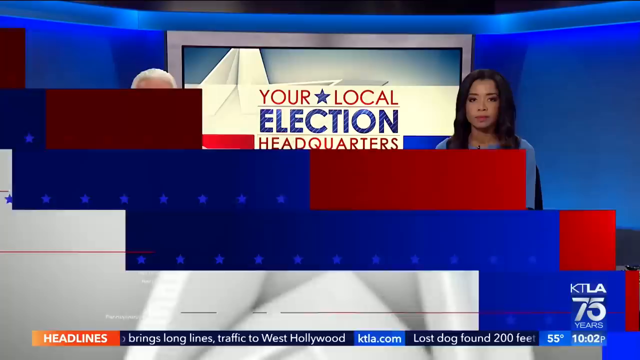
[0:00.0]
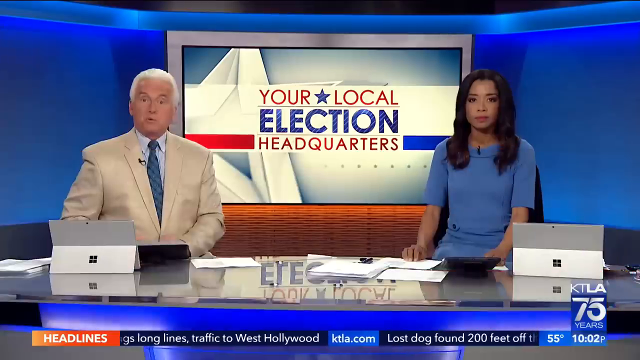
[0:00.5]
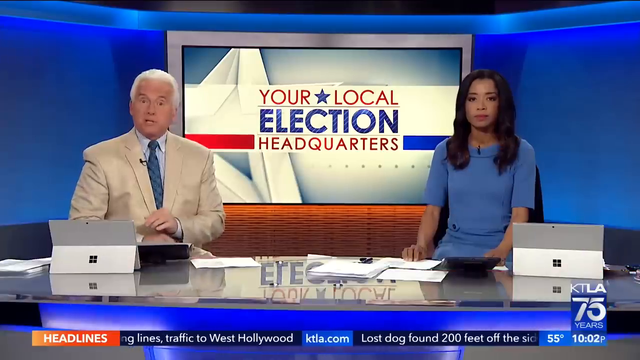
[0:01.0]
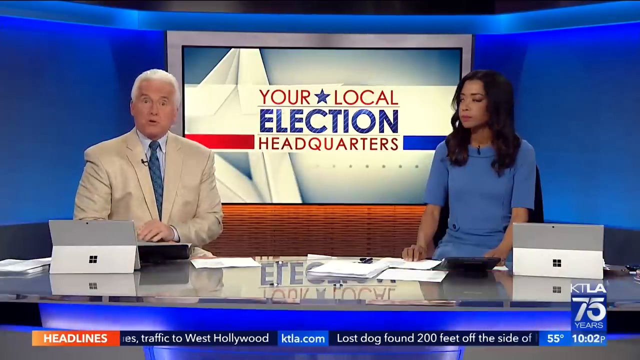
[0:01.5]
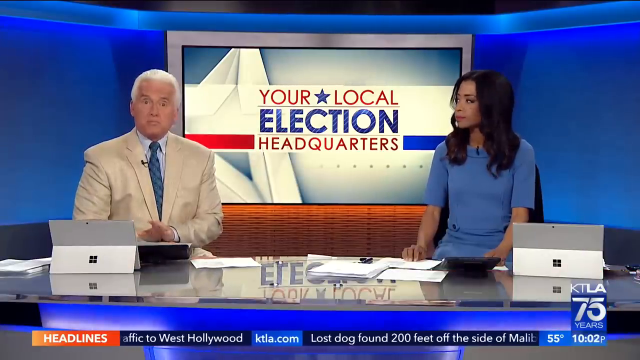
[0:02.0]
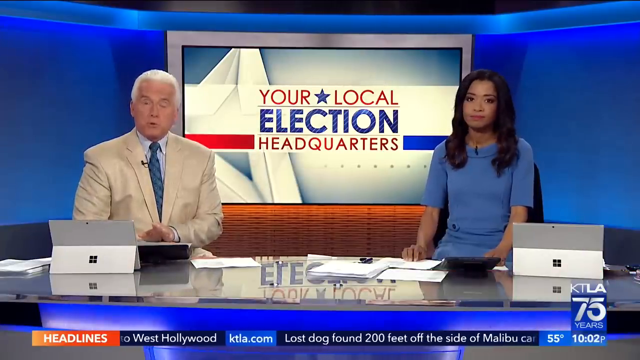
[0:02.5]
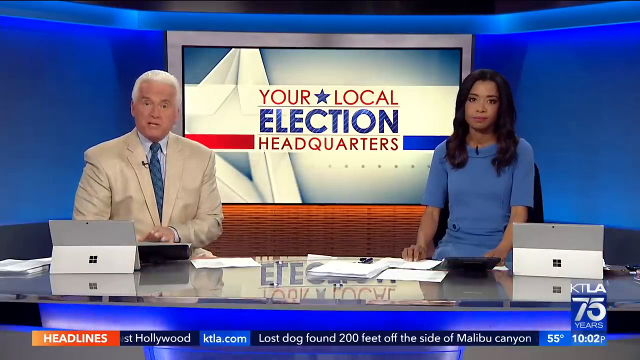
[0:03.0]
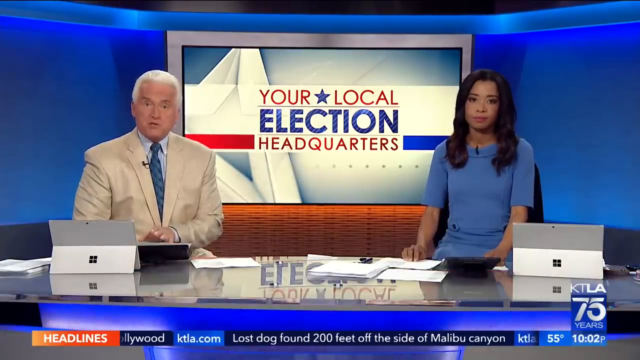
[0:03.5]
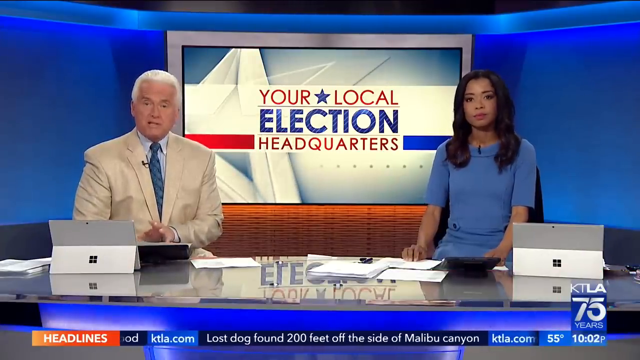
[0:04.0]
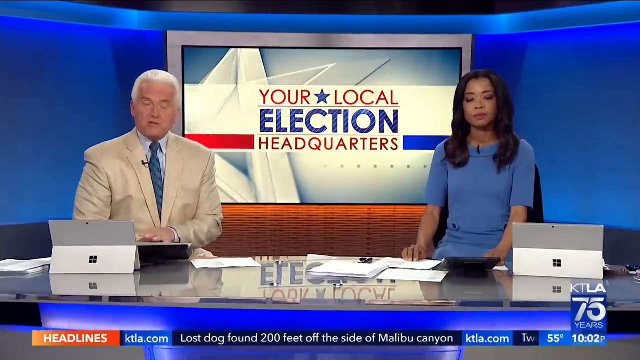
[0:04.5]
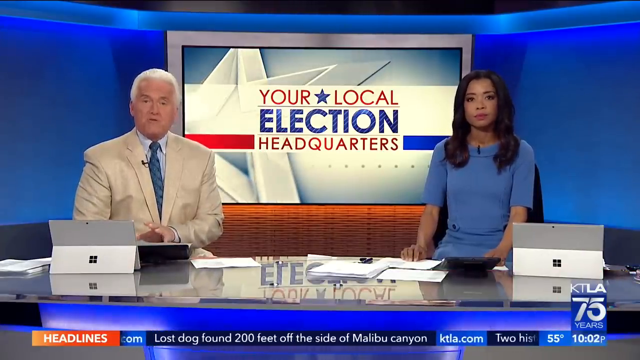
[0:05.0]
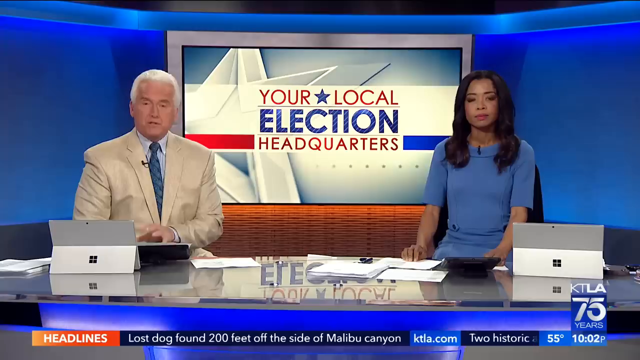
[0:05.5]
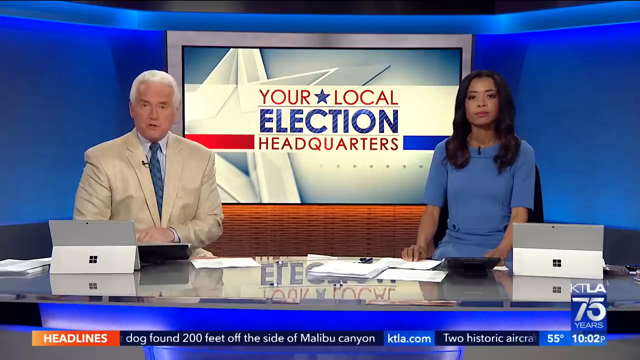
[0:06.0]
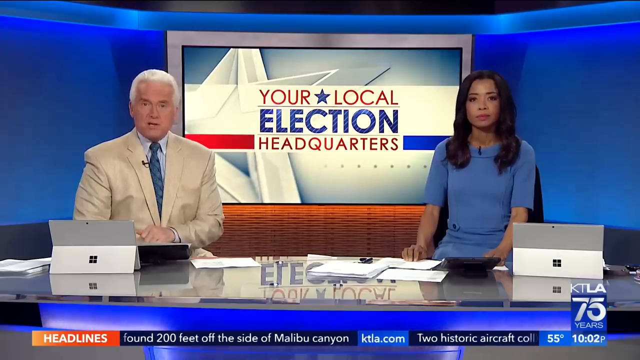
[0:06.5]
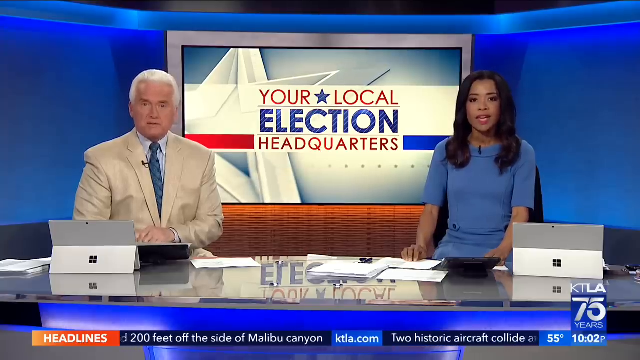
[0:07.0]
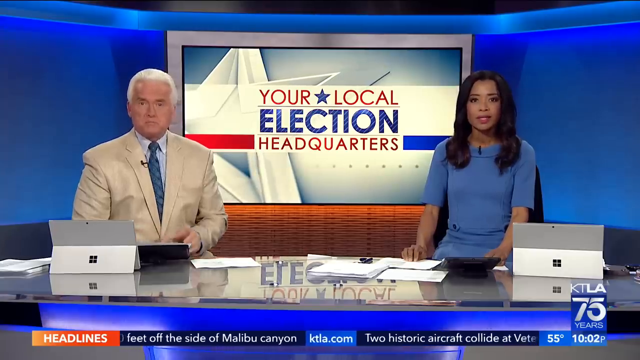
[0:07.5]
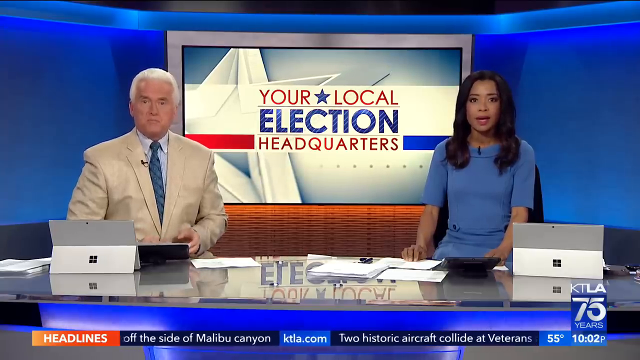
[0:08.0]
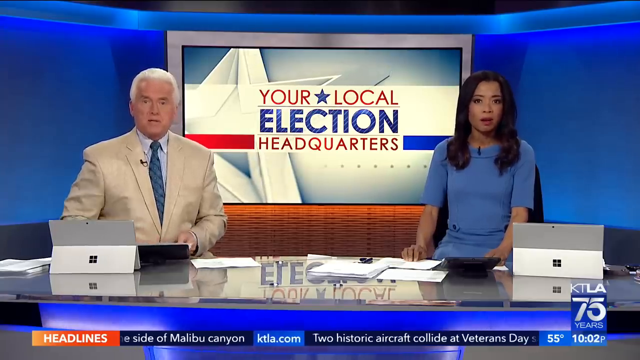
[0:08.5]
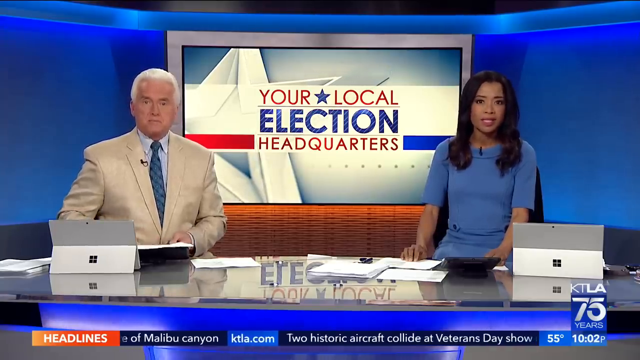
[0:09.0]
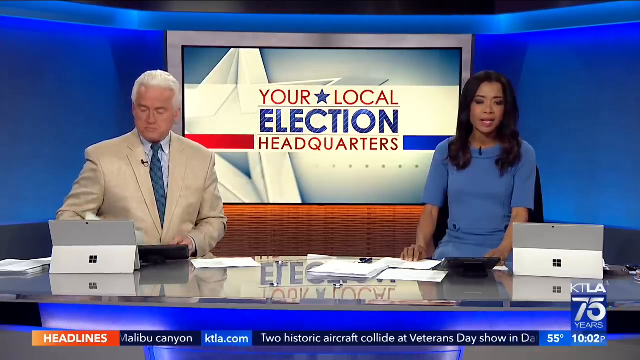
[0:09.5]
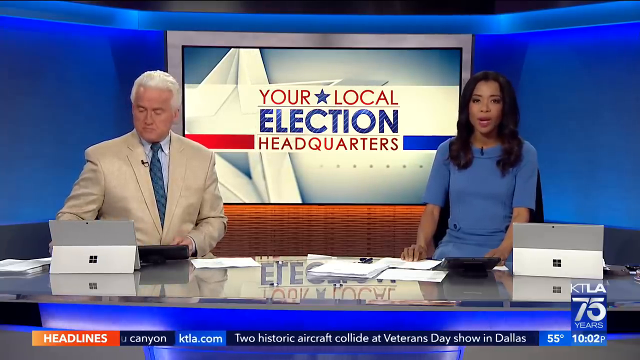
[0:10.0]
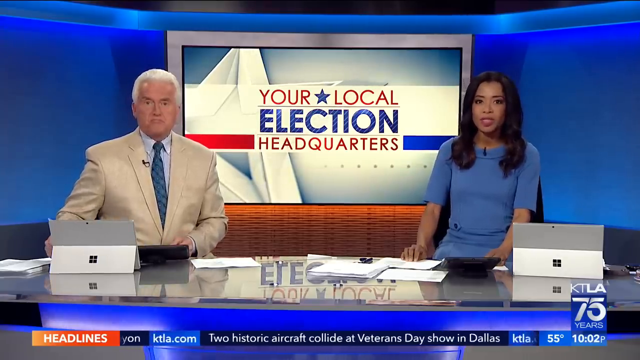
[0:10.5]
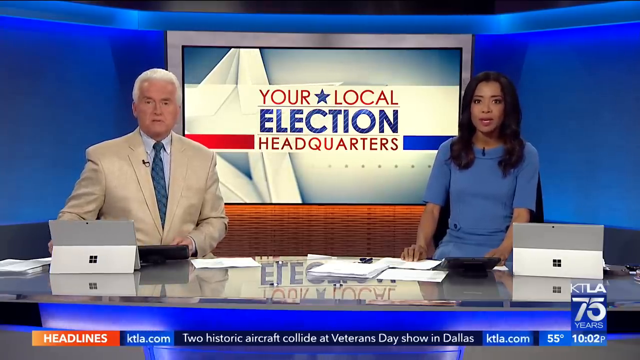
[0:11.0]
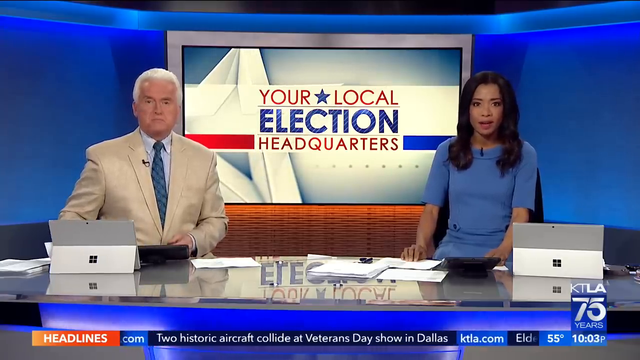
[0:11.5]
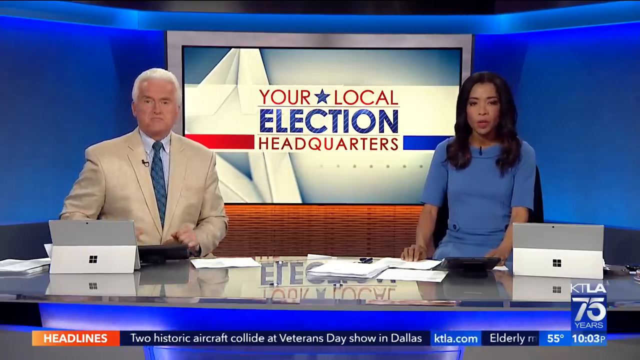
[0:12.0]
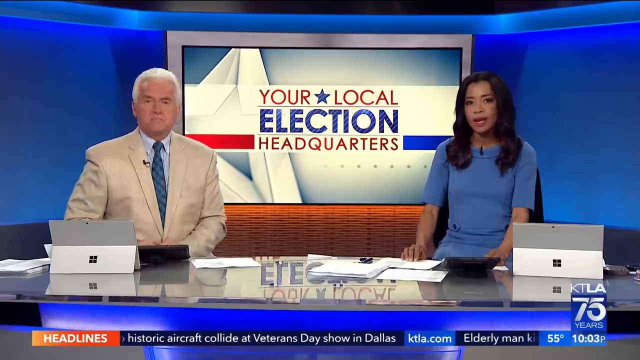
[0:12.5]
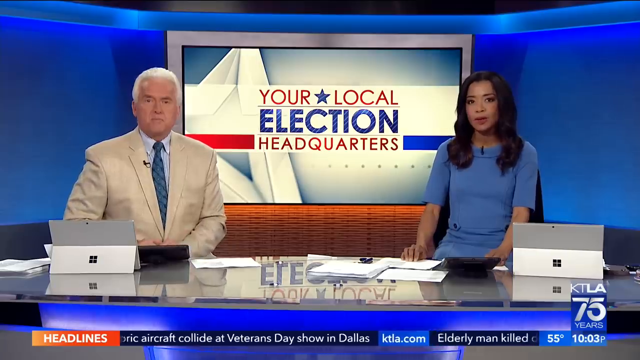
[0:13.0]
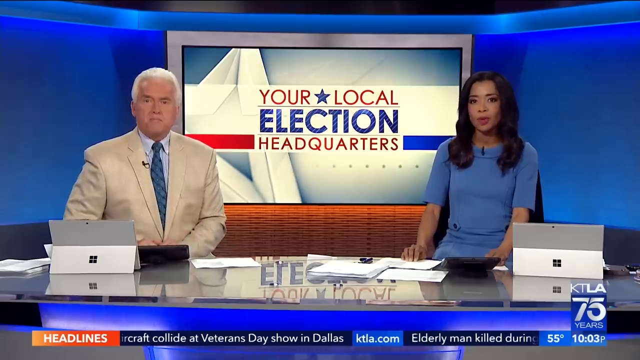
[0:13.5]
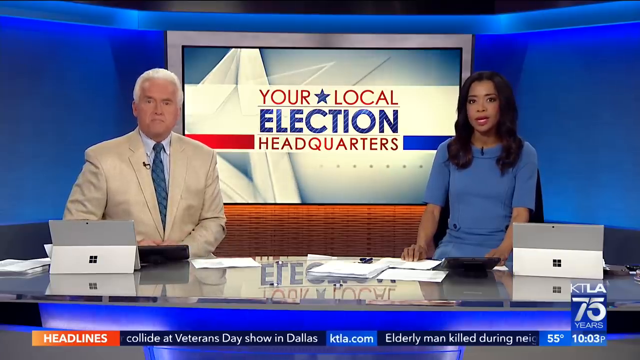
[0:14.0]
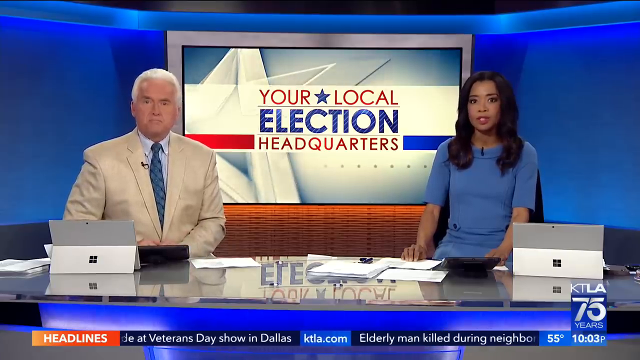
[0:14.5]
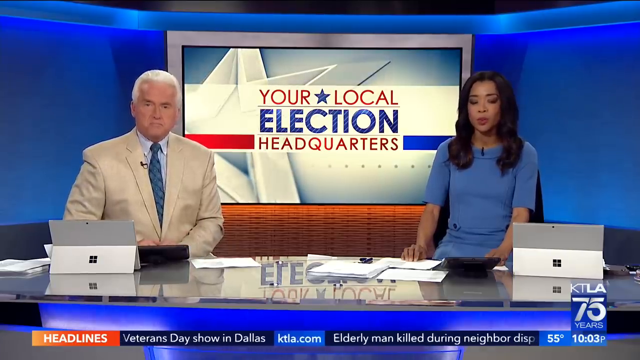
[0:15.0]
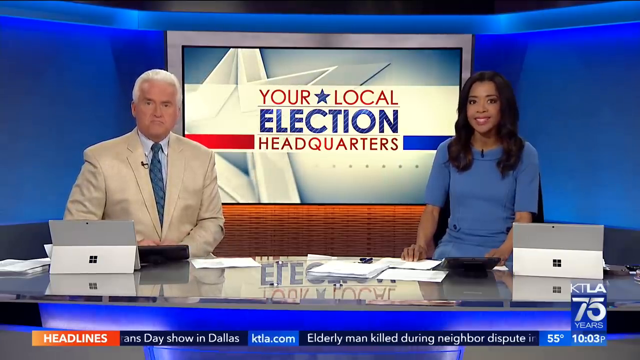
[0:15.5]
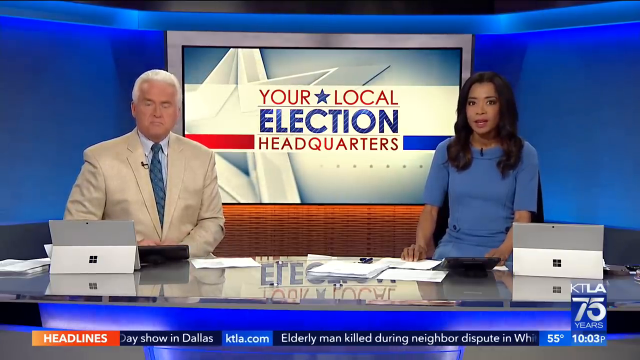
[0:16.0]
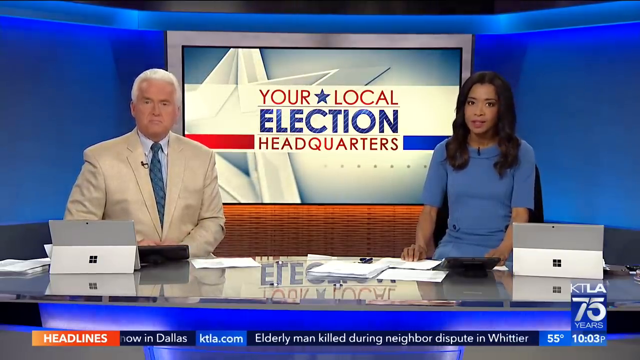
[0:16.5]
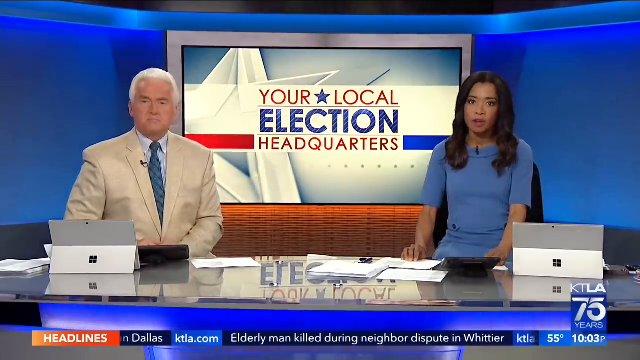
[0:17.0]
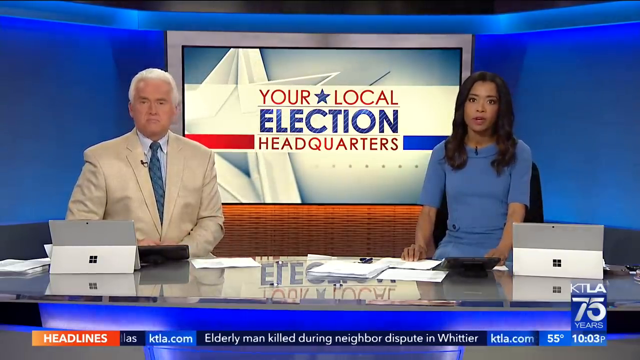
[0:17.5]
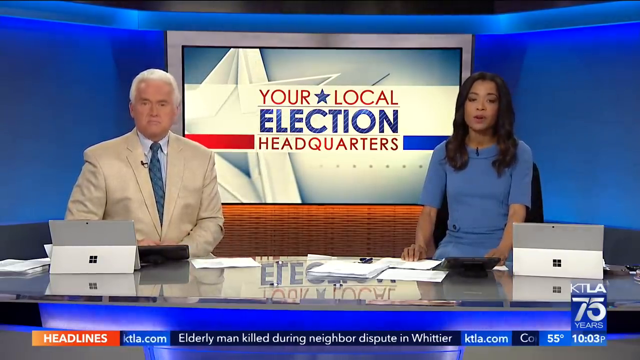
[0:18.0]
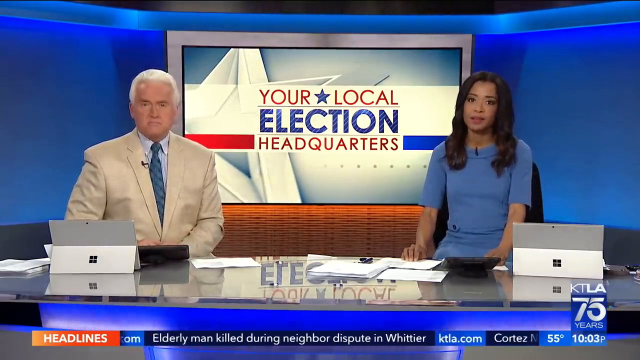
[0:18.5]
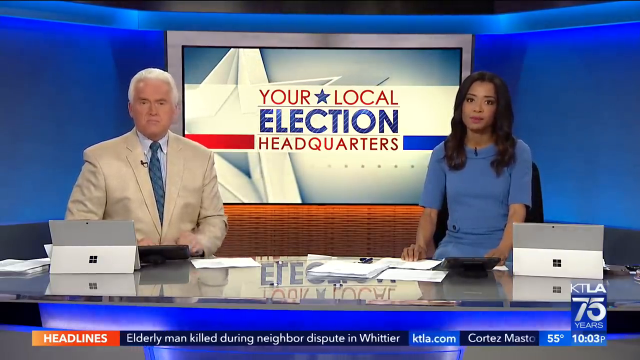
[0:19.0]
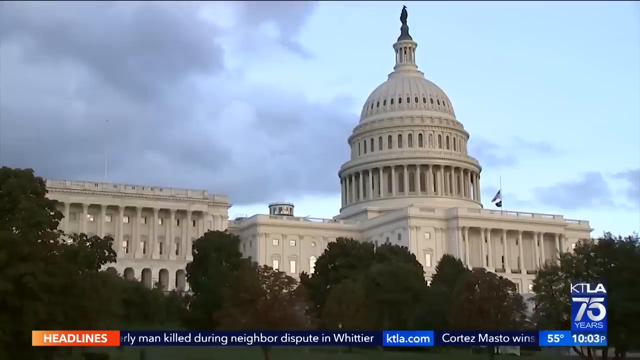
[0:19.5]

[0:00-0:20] What looks like election night coverage, probably from KTLA television, possibly in Los Angeles, shows two newscasters. On the left is a late-middle-aged man with silver hair; on the right is a woman who is black, with dark hair, pretty and slim. They are presumably talking about the election. Behind them is a big screen that says "your local election headquarters". The text is inside what appears to be a digitally created screen, like a computer terminal or TV screen imposed on a background, and behind that digitally imposed screen is a large blue digital wall.